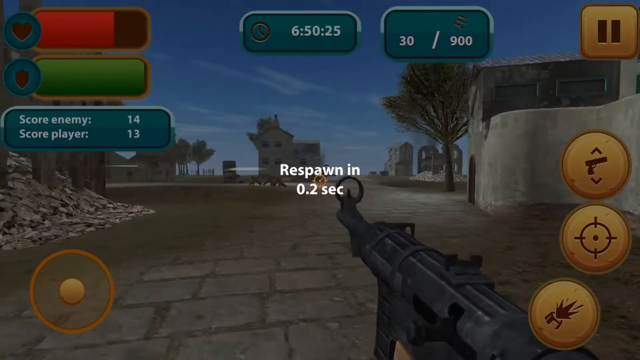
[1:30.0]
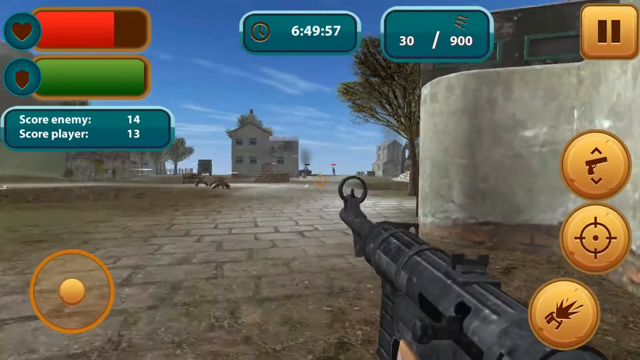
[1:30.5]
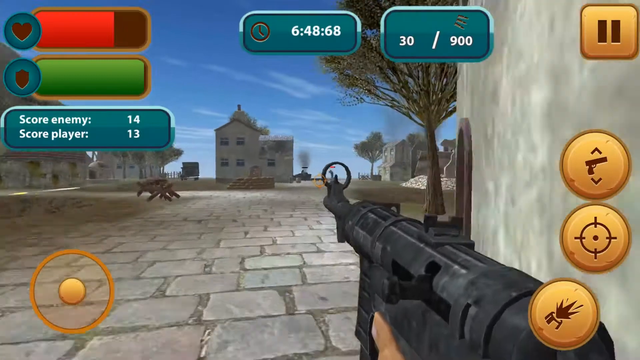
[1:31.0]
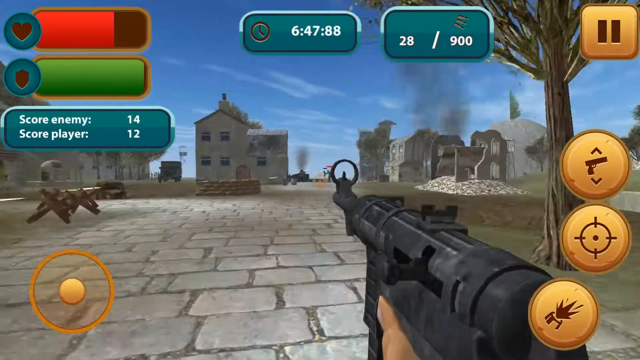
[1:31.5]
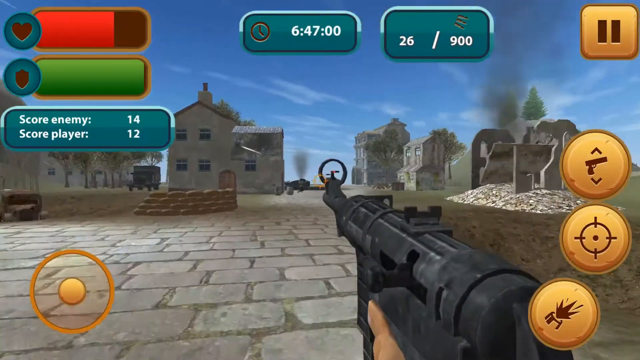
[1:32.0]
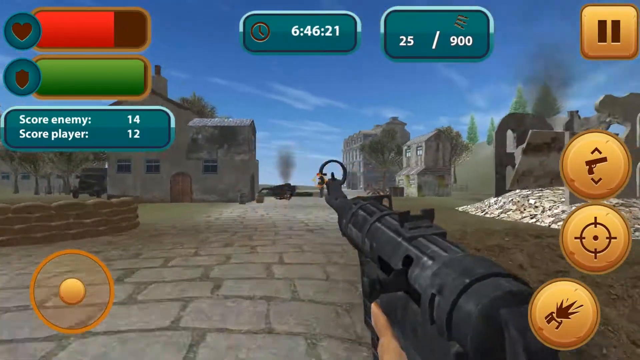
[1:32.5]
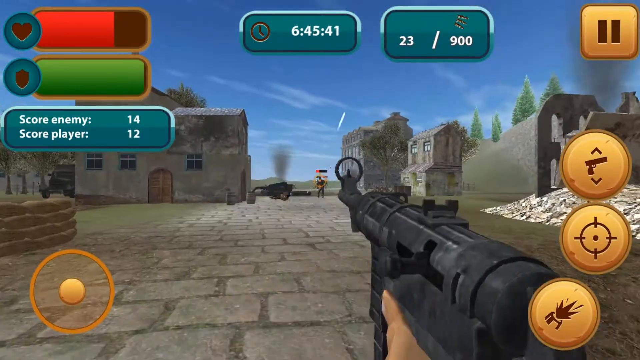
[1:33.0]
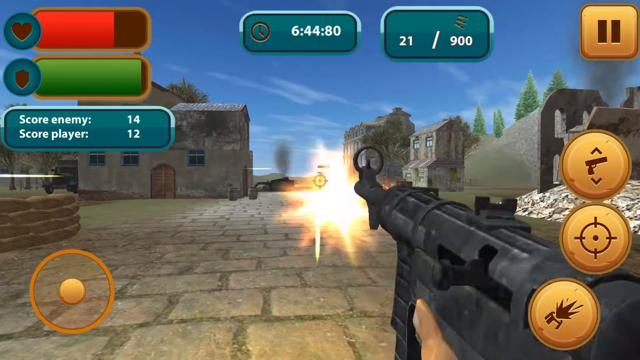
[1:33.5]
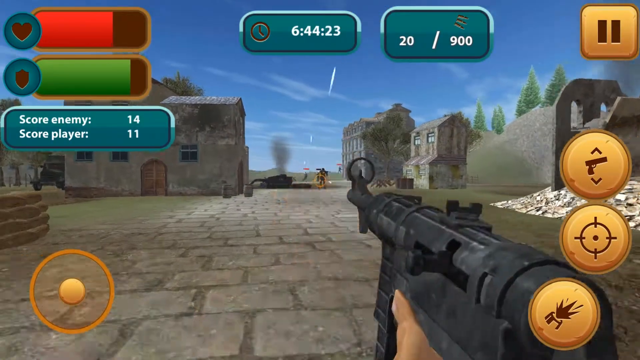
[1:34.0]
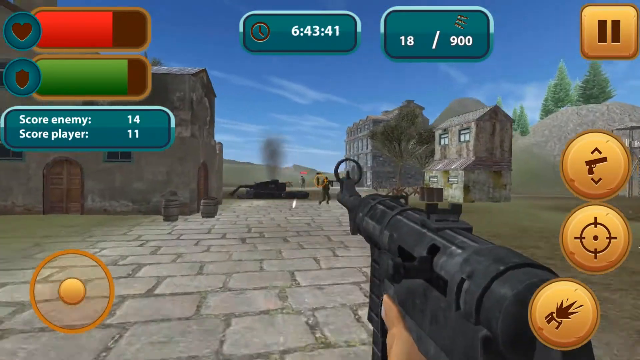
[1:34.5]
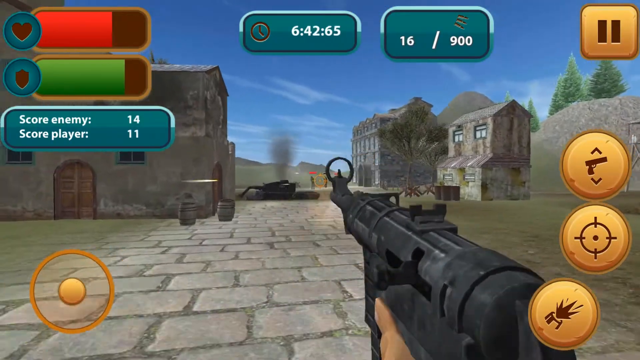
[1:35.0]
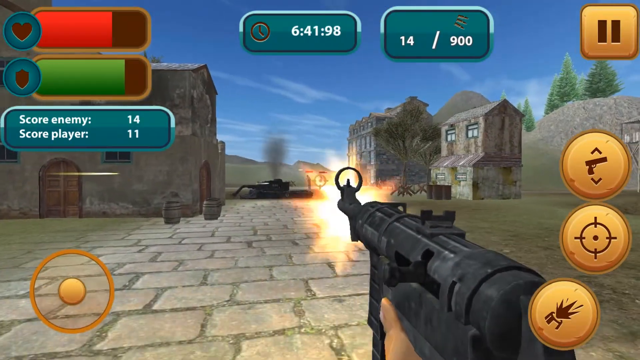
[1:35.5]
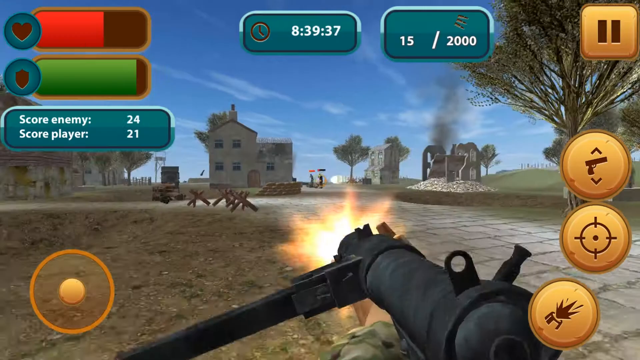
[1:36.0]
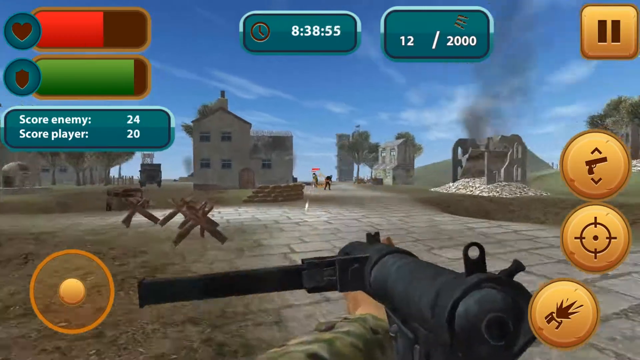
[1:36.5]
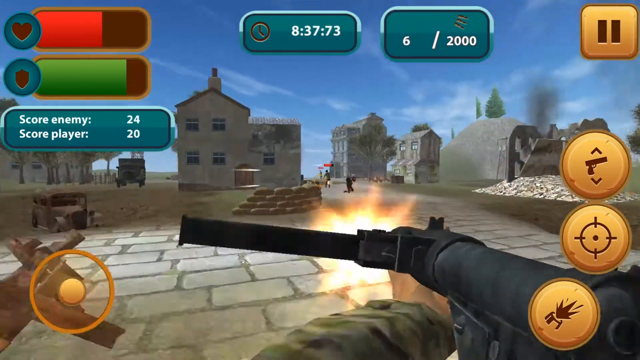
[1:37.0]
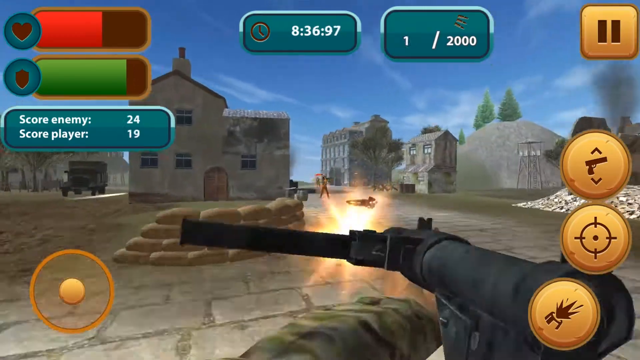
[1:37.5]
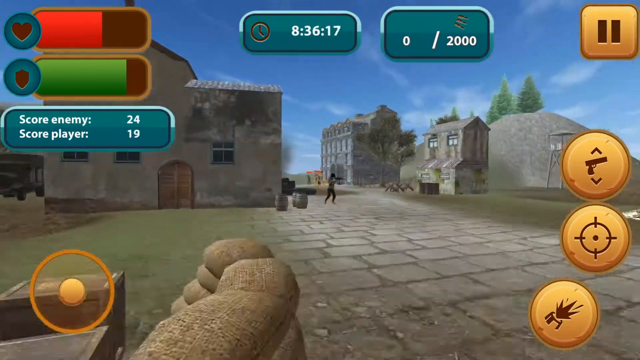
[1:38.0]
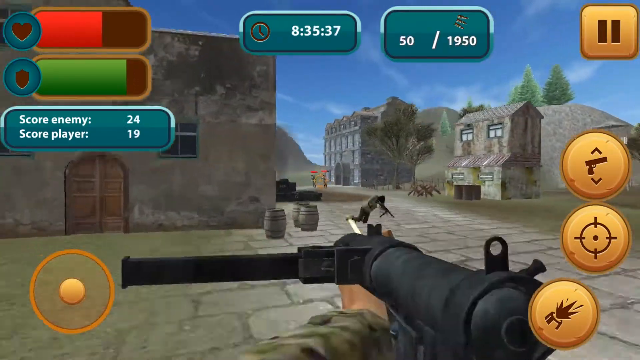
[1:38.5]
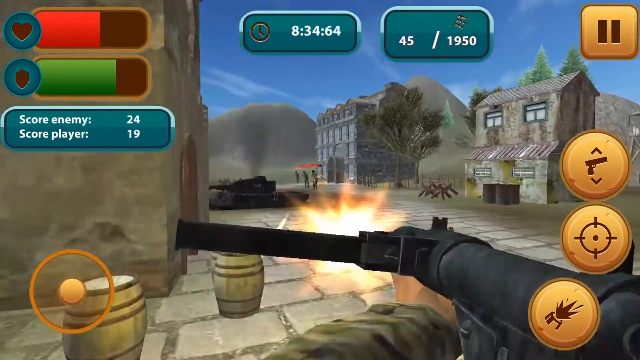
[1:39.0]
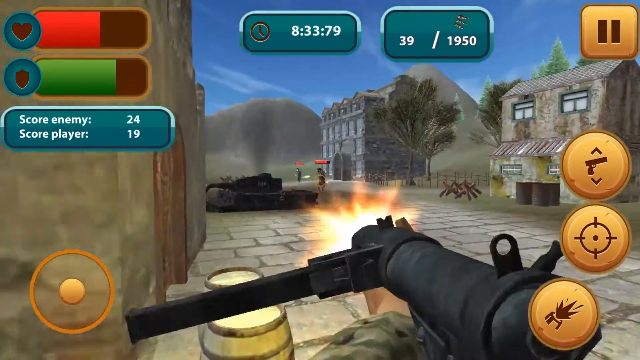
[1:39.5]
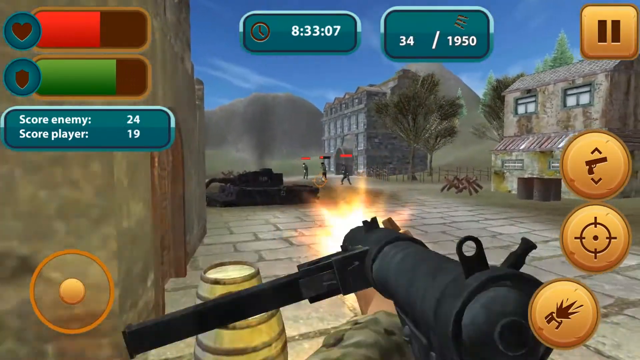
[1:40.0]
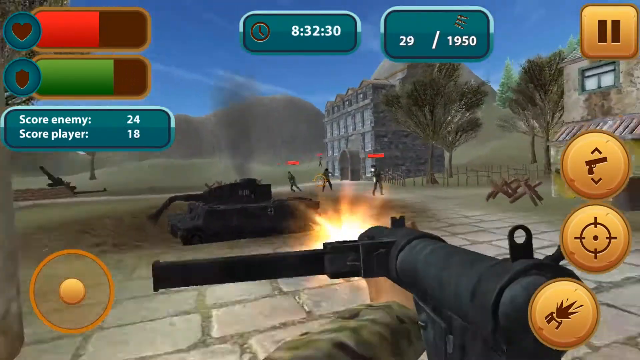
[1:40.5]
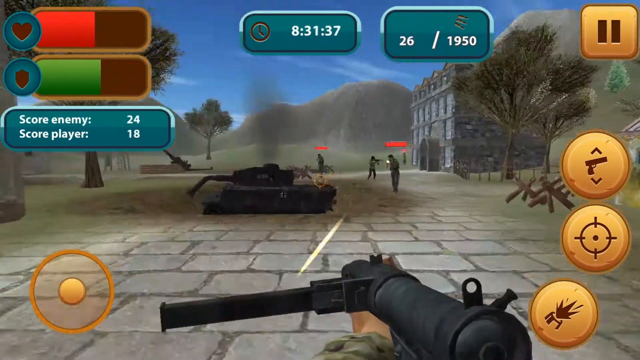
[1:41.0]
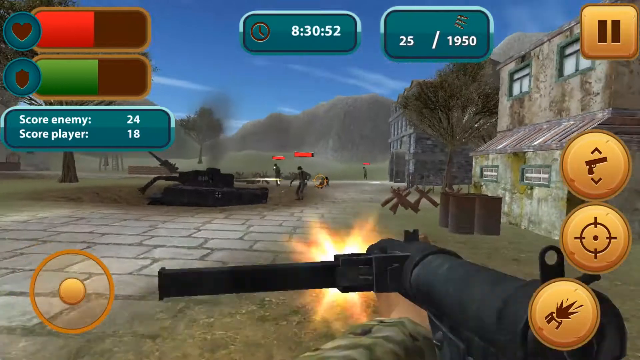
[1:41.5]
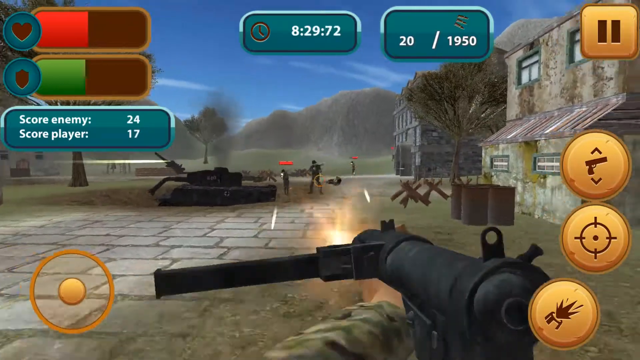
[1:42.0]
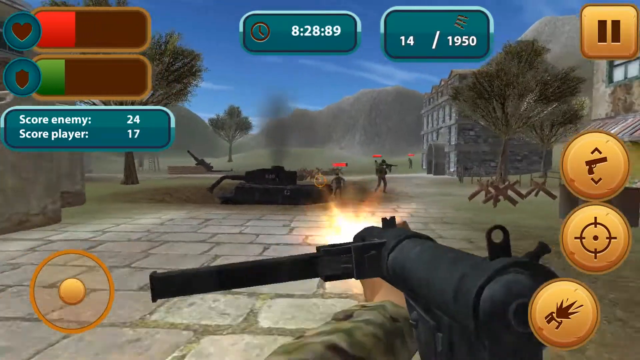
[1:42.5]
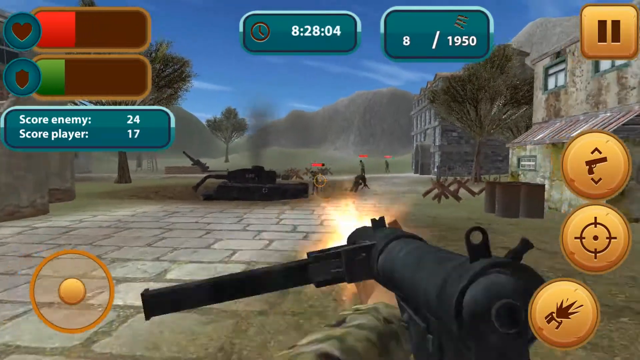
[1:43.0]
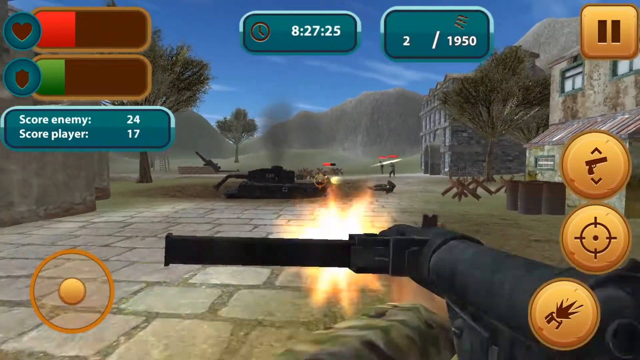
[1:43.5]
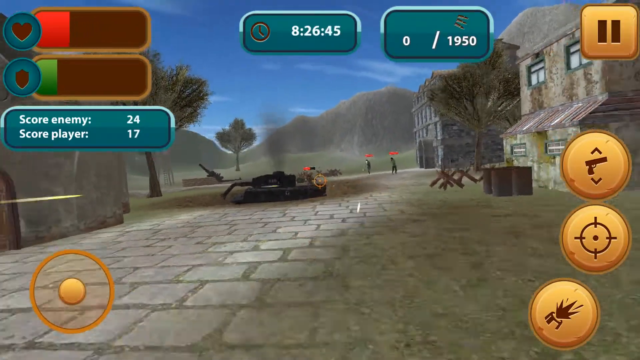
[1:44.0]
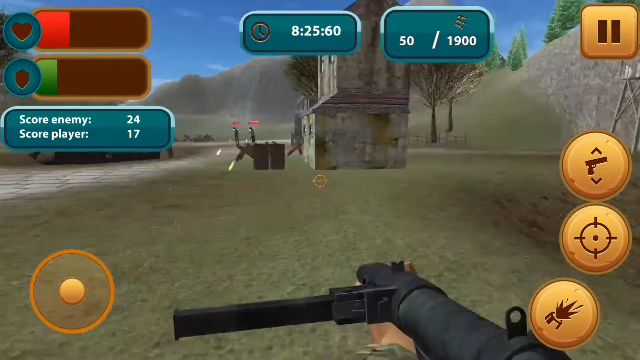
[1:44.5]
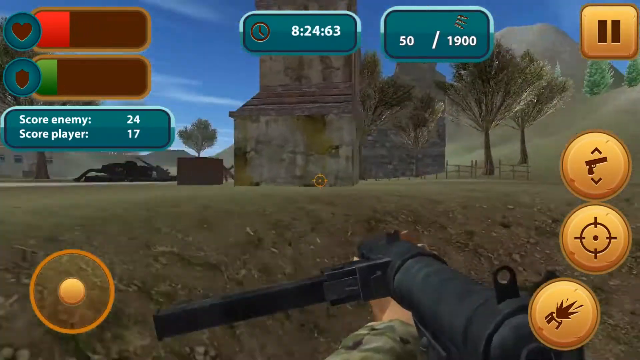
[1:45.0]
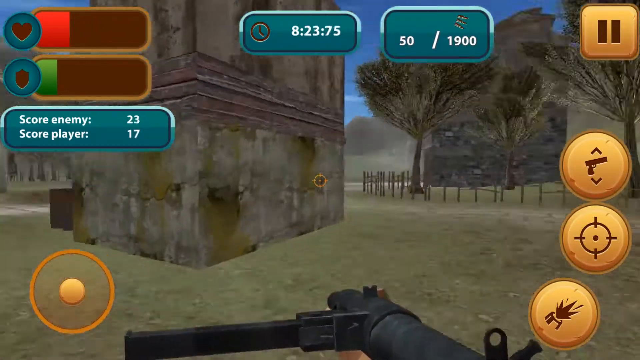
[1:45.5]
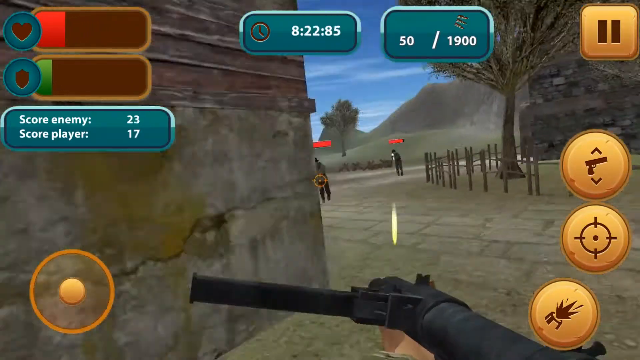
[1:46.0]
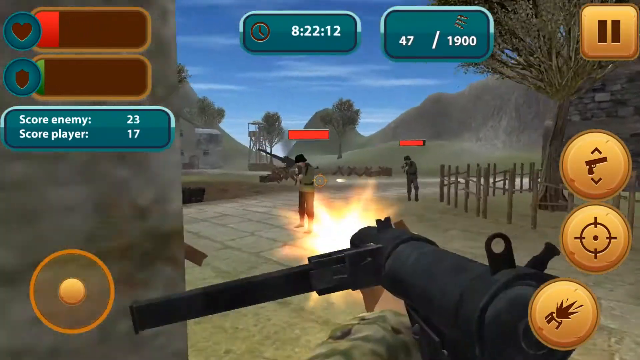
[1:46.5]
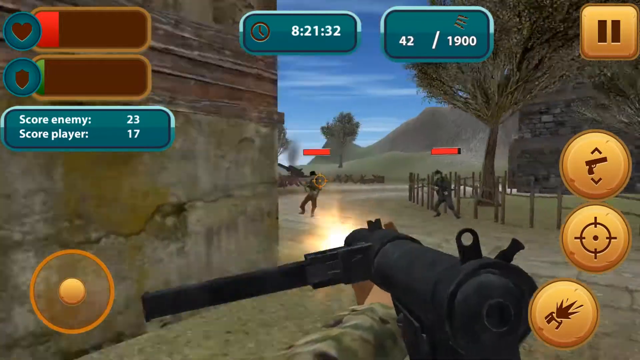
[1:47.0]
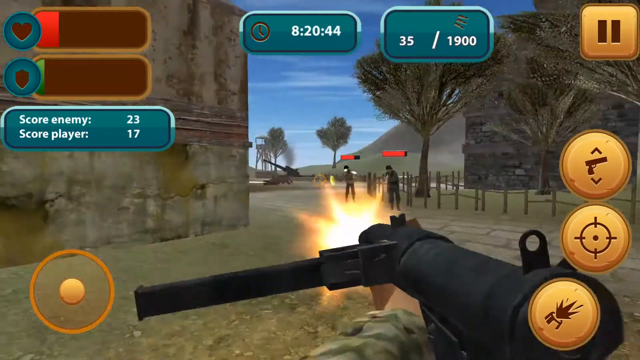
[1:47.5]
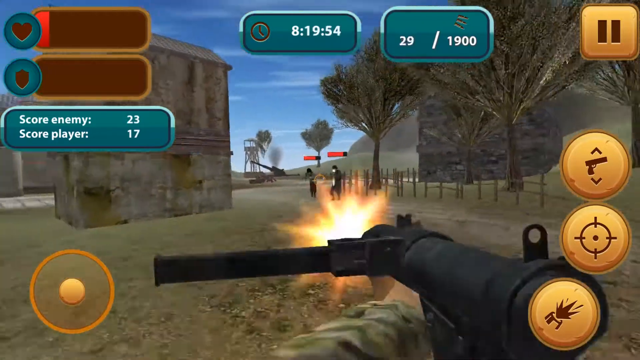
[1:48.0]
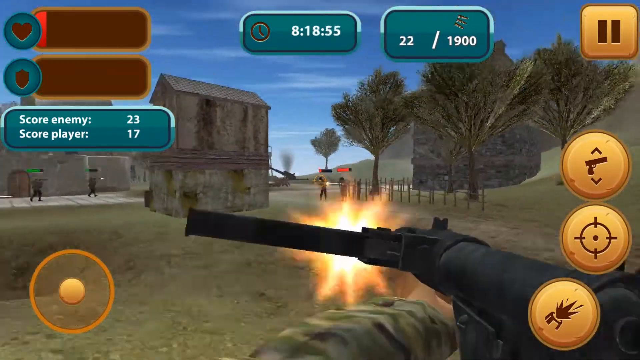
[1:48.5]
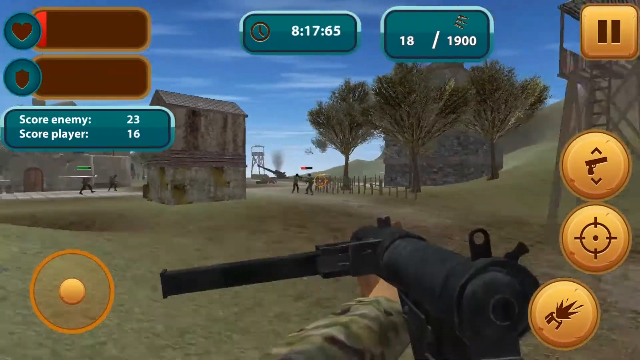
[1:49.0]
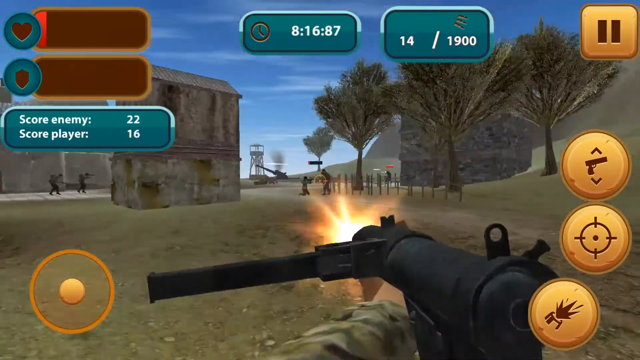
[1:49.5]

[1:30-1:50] The protagonist respawns and shoots an MP5 or a Grease Gun, then switches to another SMG of an unclear kind. He appears to be shooting at enemy AIs and nearly dies. At one point he appears to charge towards the broken-down German Panzer tank, taking heavy fire but surviving by a thread. During the charge, what looks like the broken-down cargo vehicle, a sort of cargo truck, is visible, as well as a watchtower, what looks like a fully intact building where the enemies spawn from, and a number of other buildings that are either damaged, intact, or somewhere in between.